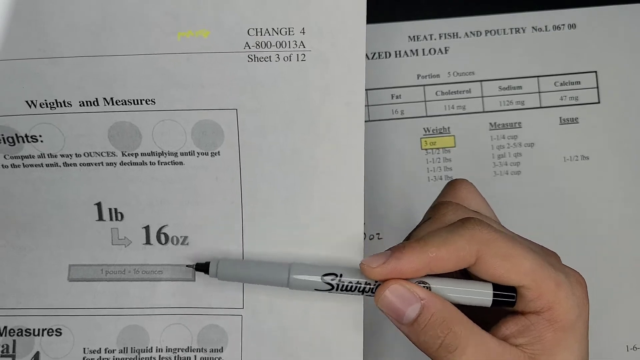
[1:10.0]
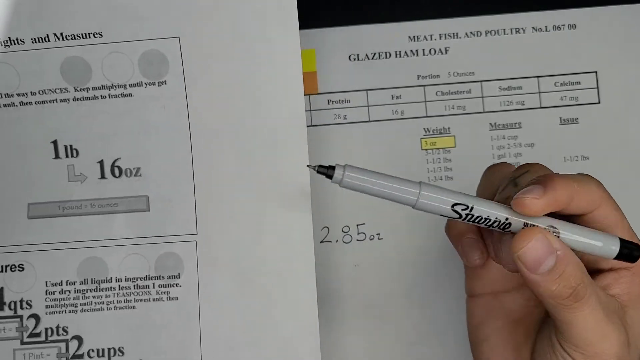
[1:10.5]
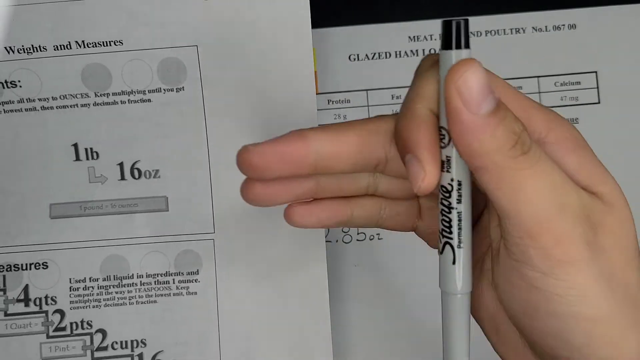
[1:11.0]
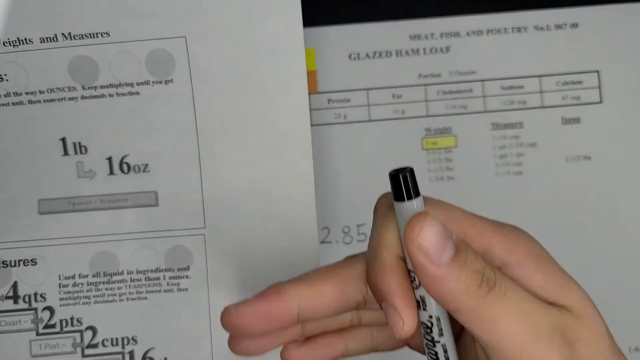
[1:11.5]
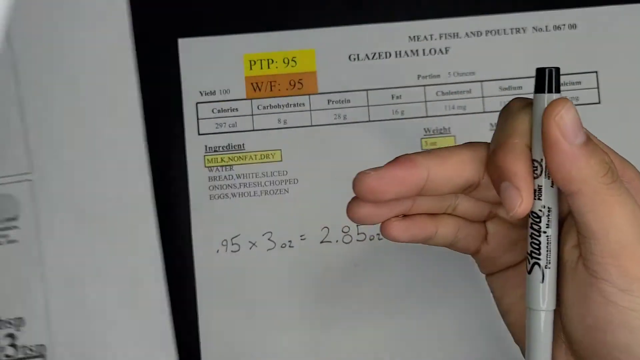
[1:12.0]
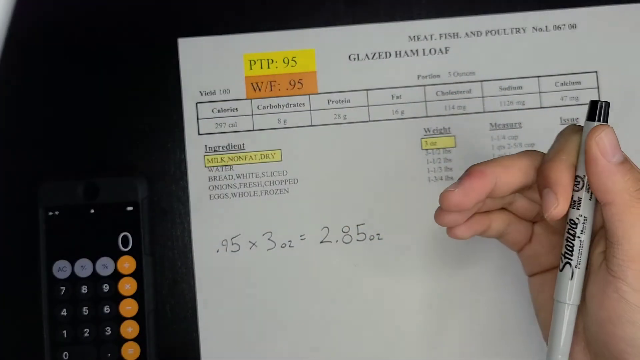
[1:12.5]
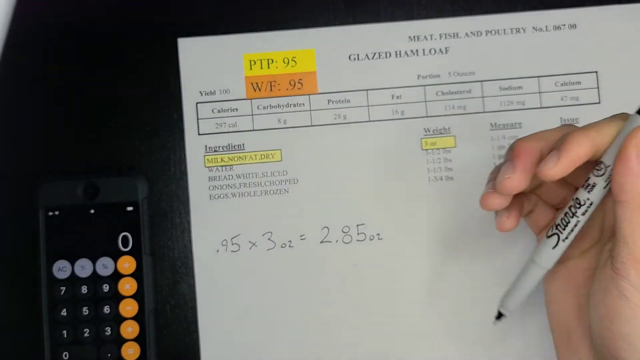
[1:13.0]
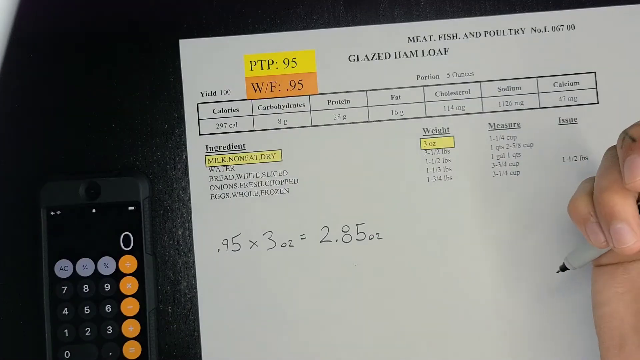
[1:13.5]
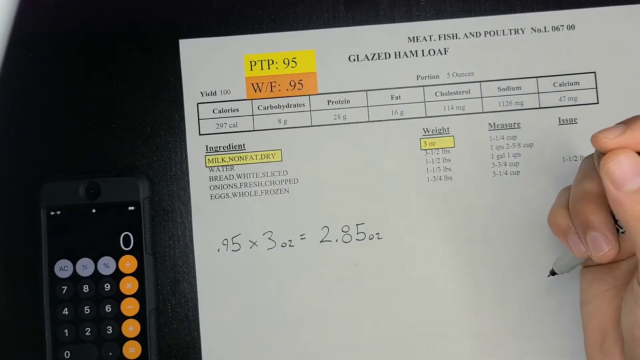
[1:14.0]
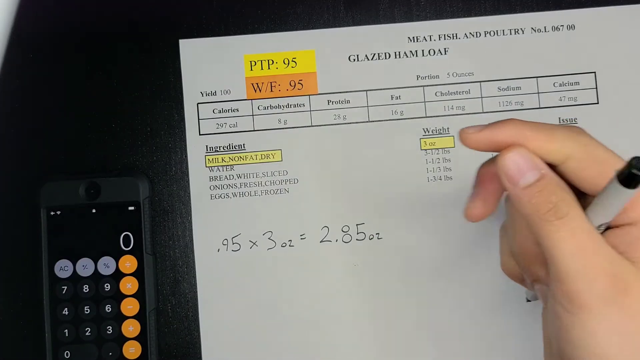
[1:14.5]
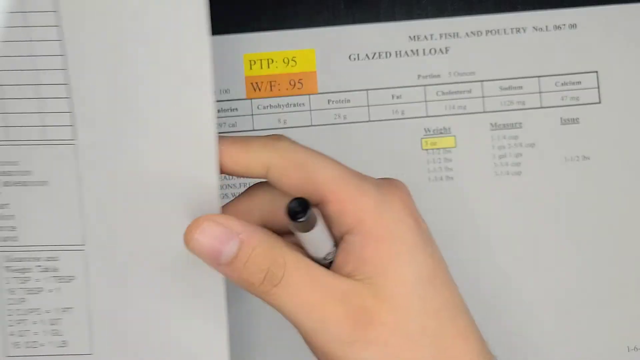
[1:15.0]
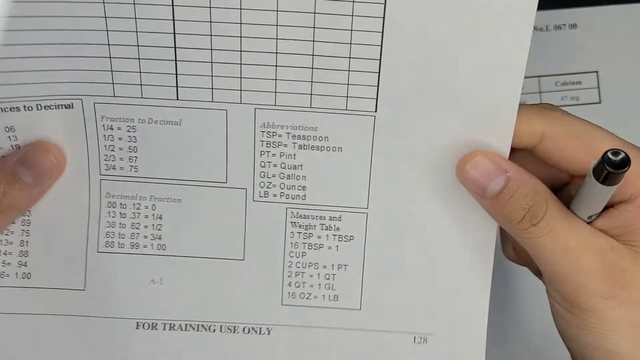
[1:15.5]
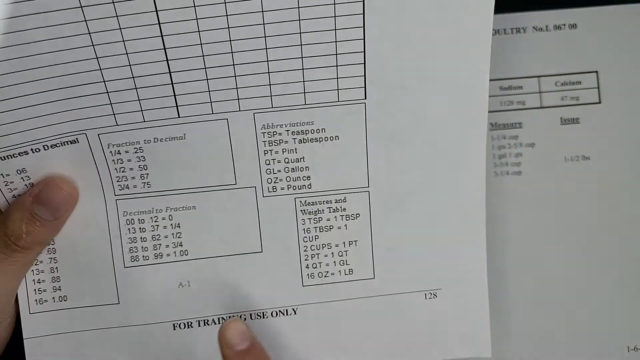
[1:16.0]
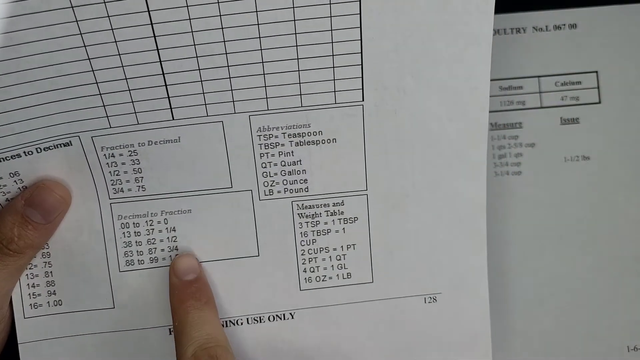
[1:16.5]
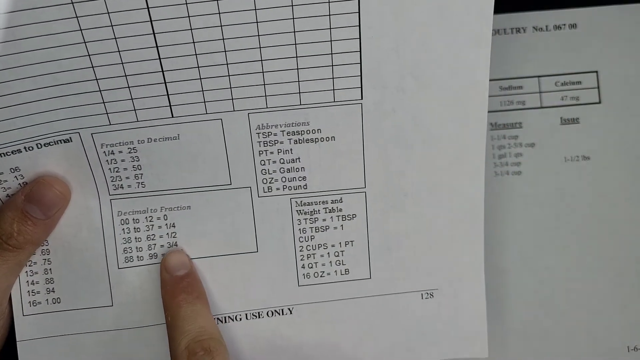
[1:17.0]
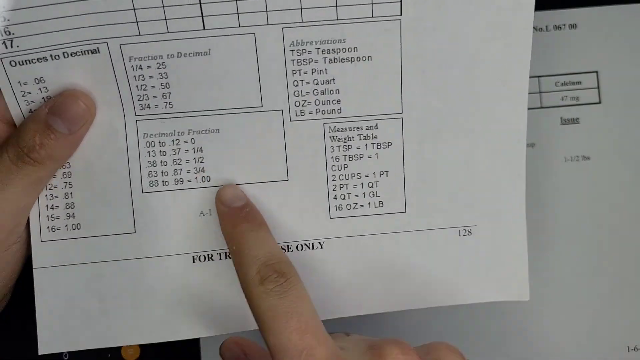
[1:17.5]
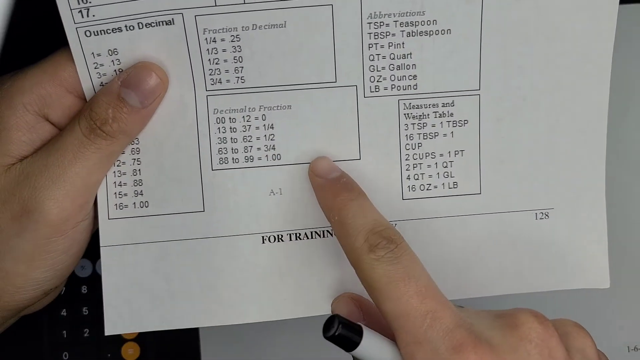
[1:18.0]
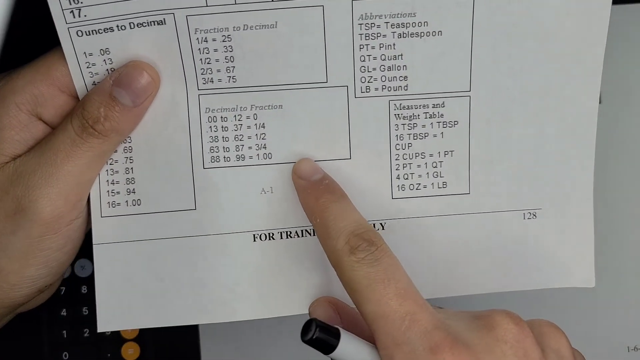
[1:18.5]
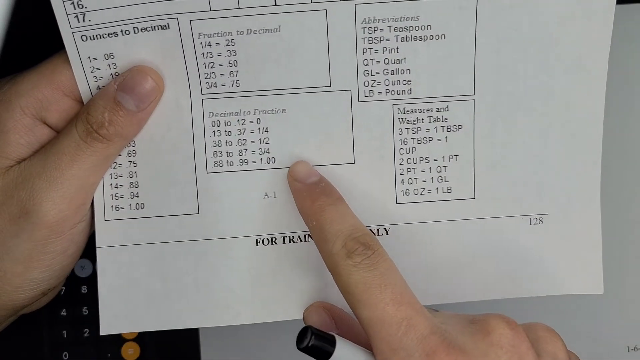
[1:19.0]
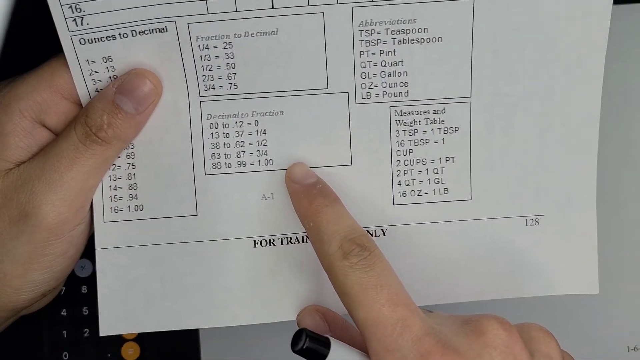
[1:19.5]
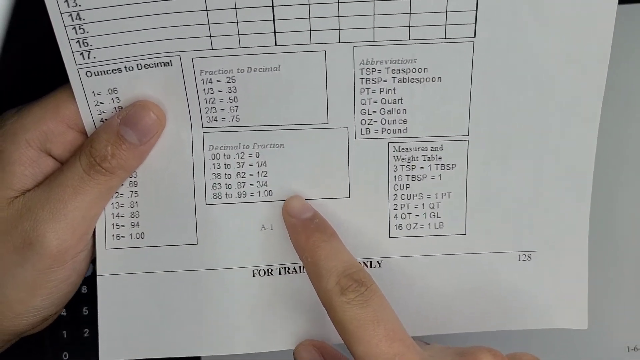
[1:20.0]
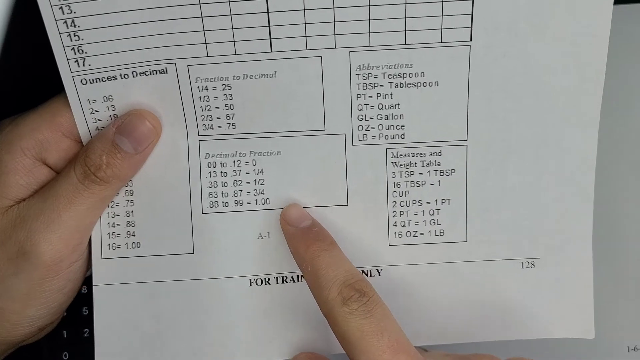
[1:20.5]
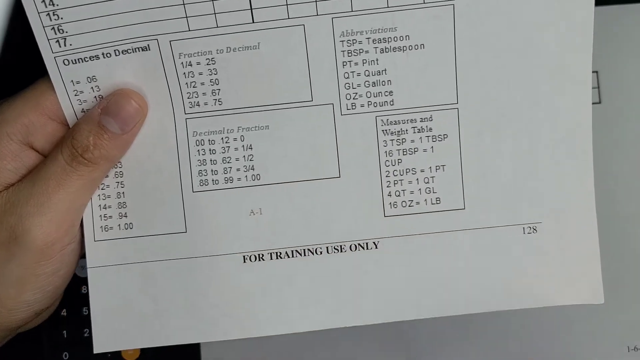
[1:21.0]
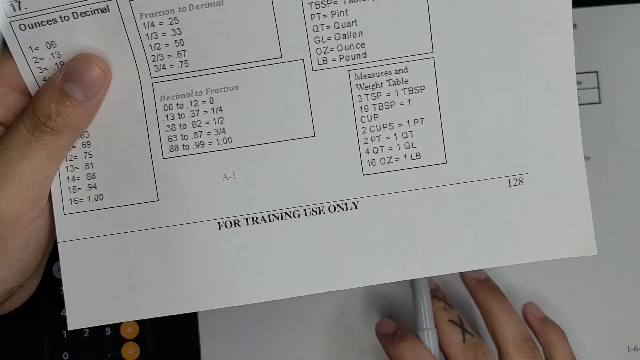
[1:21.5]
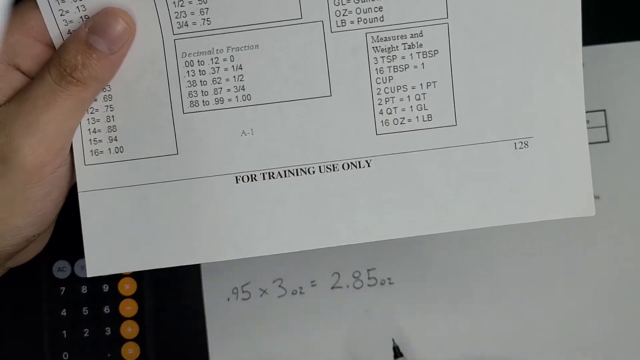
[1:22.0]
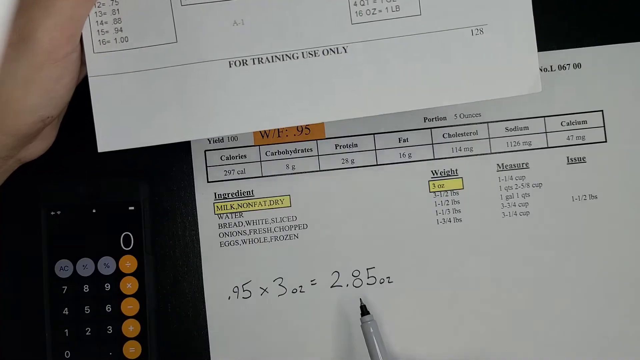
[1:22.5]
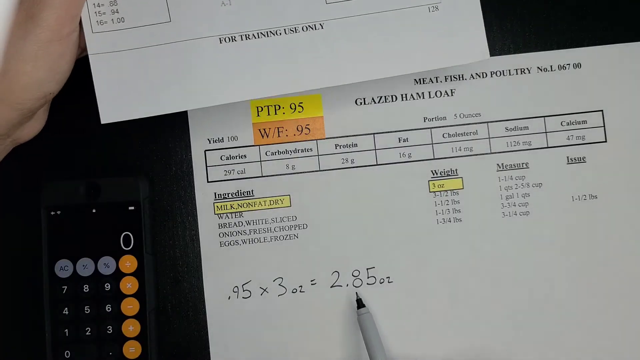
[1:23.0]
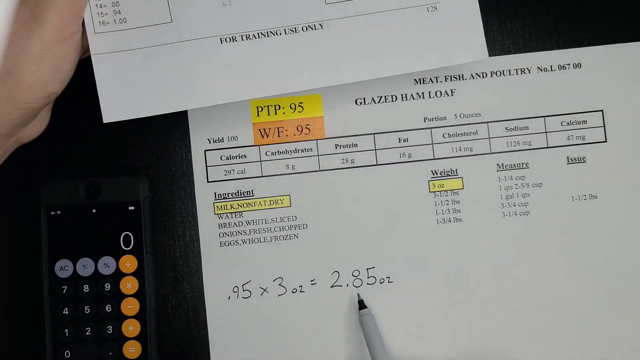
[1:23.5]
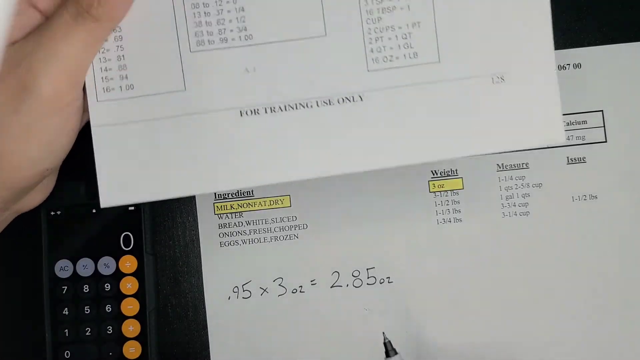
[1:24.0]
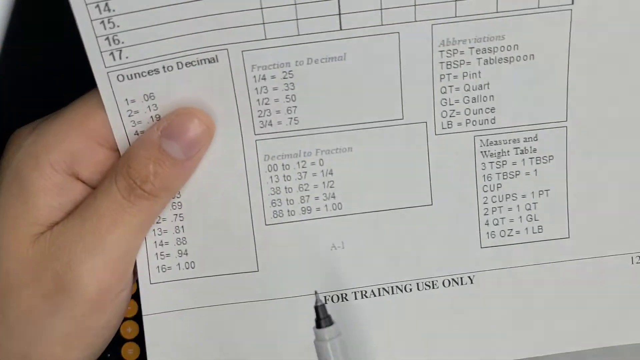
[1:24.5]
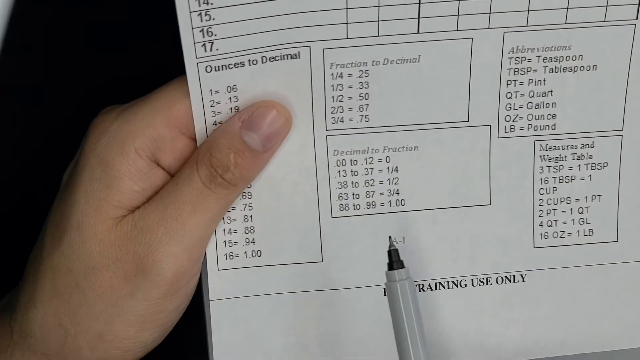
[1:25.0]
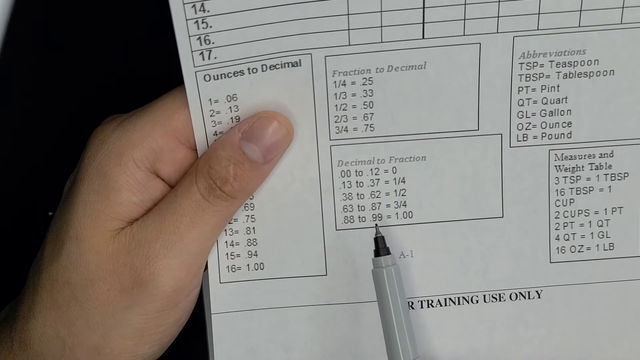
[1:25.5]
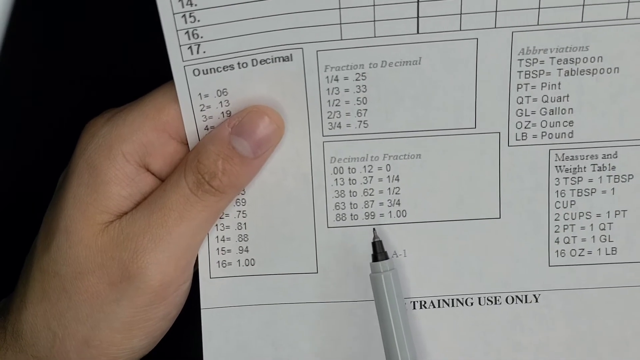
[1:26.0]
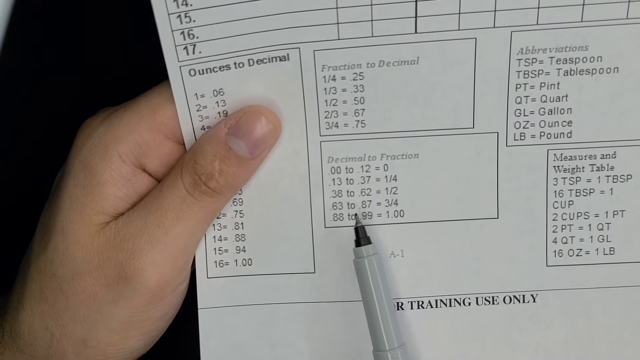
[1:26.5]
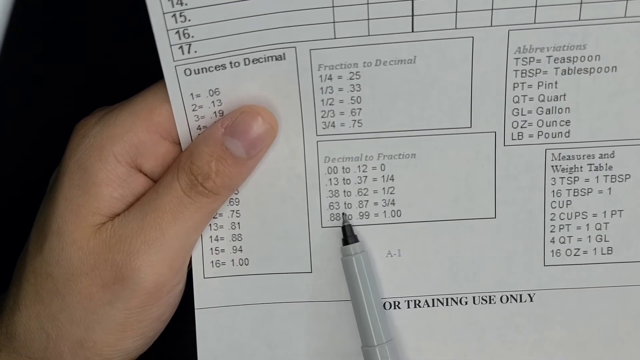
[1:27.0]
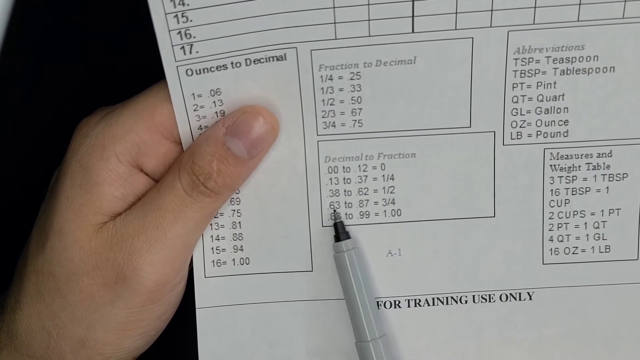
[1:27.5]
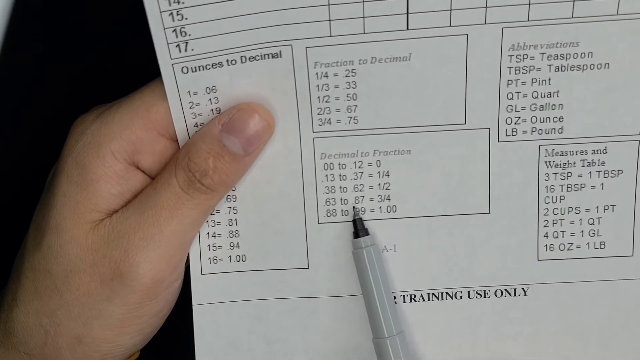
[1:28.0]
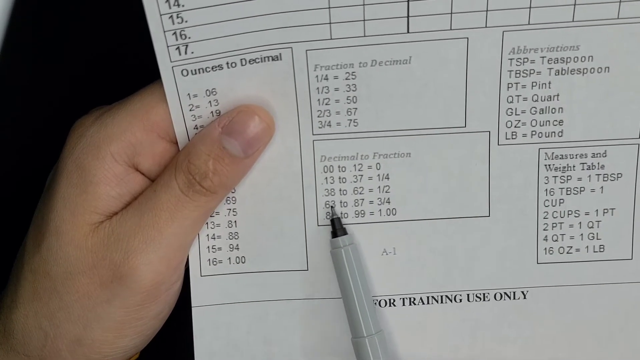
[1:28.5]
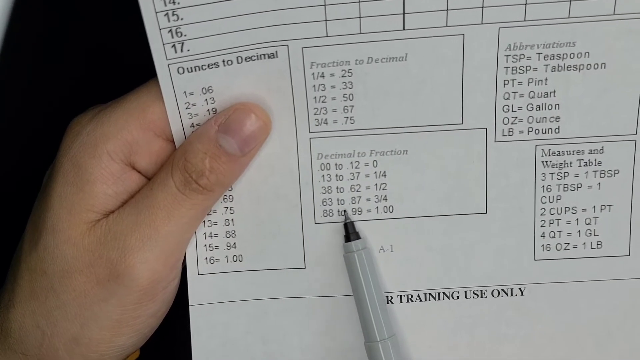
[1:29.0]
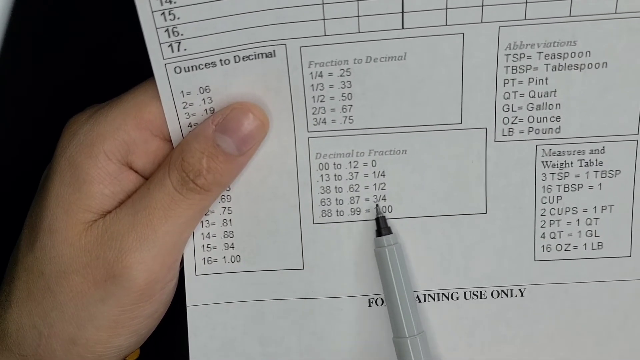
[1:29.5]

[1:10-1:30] Different measures have been made. A calculator is shown, along with another paper of specifications showing decimal fractions, which the calculated number matches. The ingredients are listed with different amounts of carbohydrates, proteins and sugars.